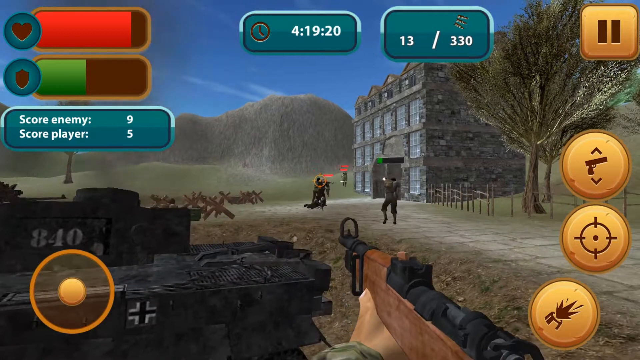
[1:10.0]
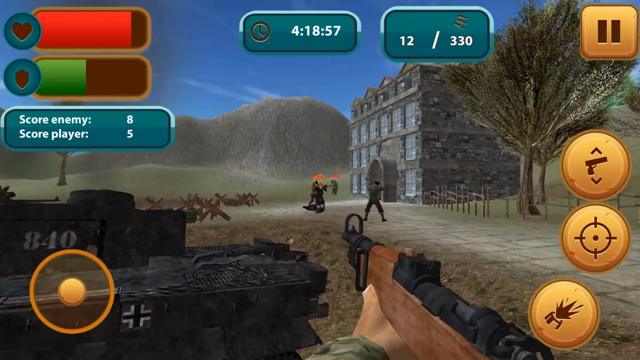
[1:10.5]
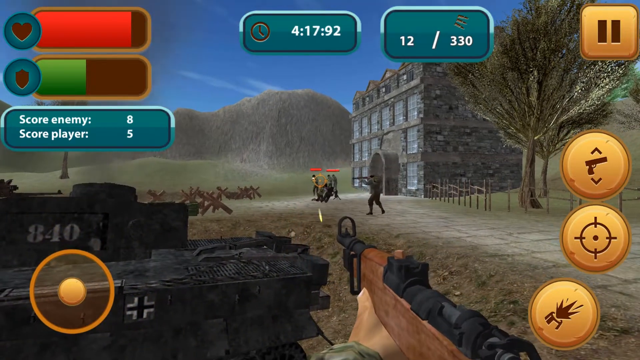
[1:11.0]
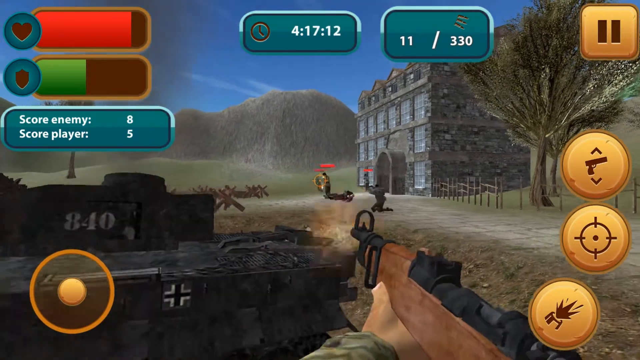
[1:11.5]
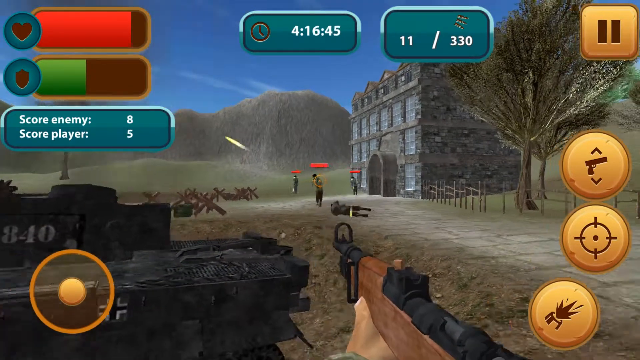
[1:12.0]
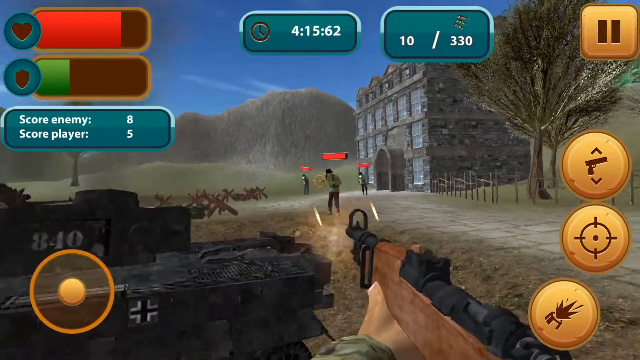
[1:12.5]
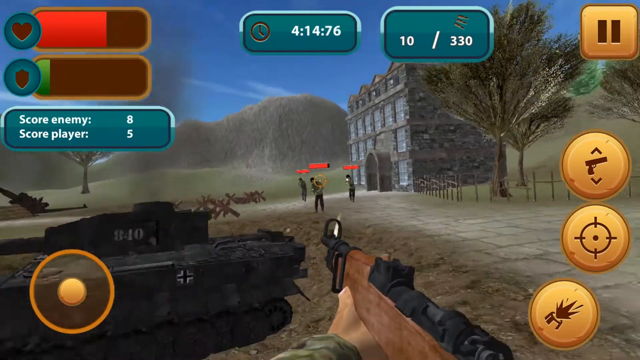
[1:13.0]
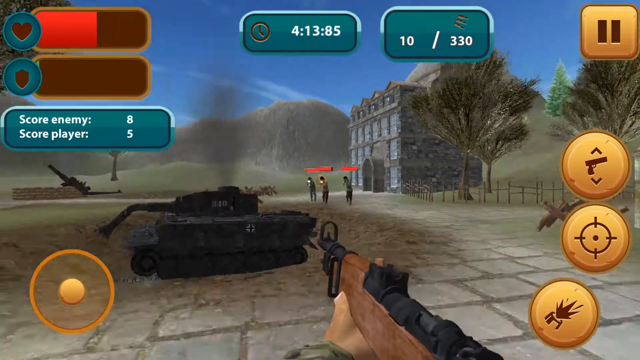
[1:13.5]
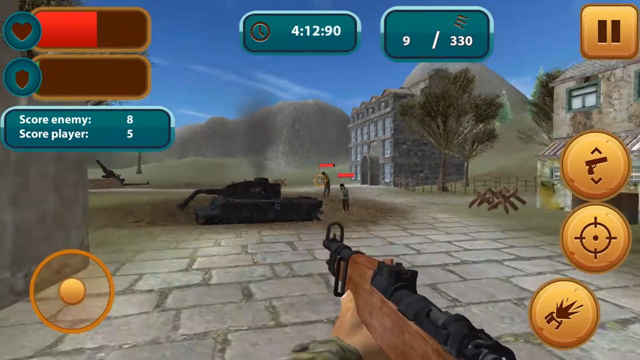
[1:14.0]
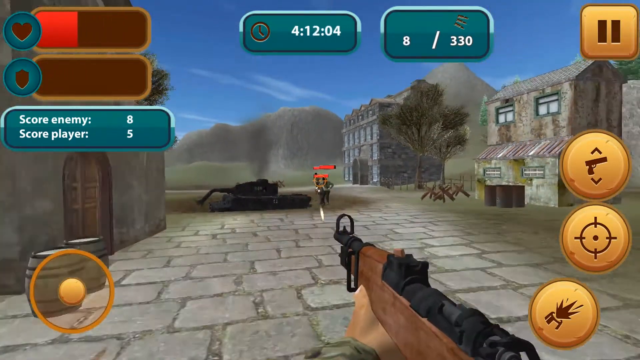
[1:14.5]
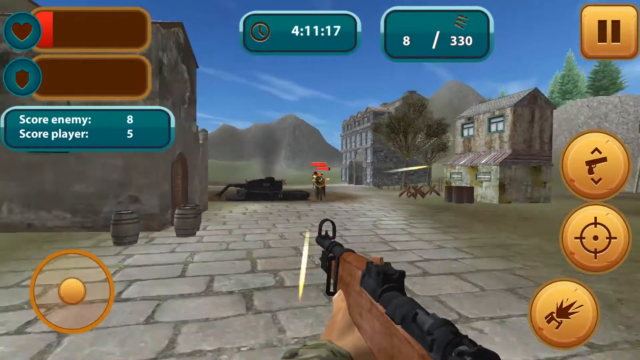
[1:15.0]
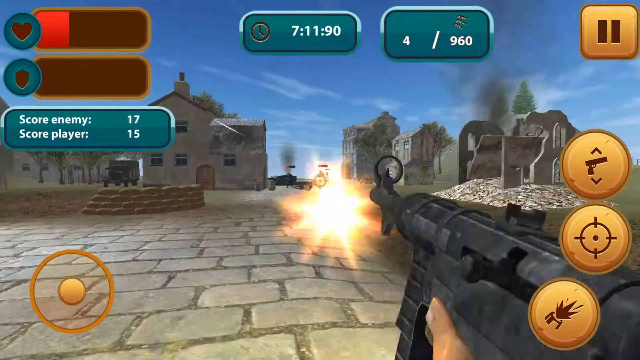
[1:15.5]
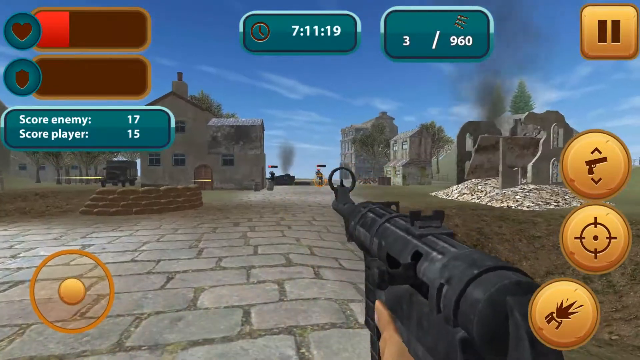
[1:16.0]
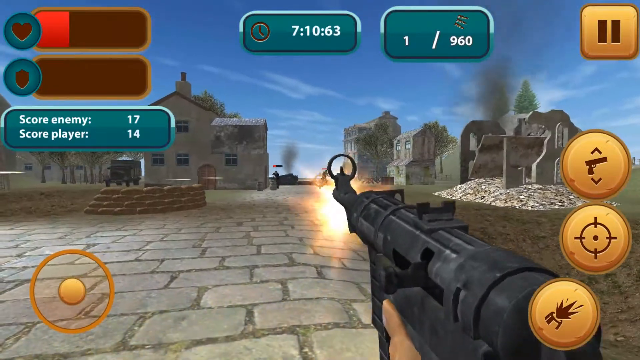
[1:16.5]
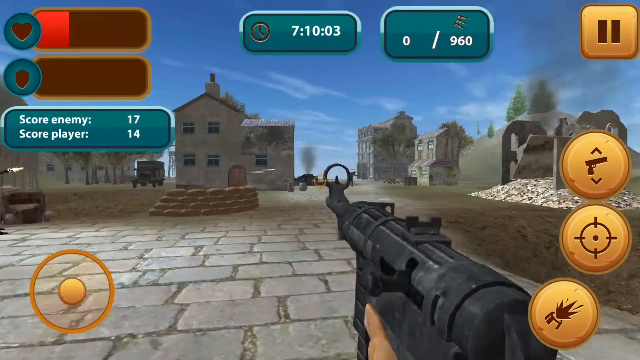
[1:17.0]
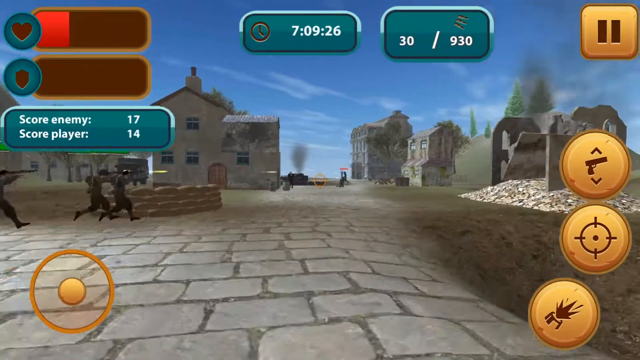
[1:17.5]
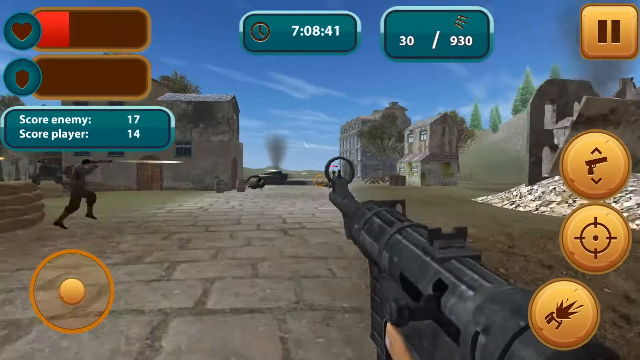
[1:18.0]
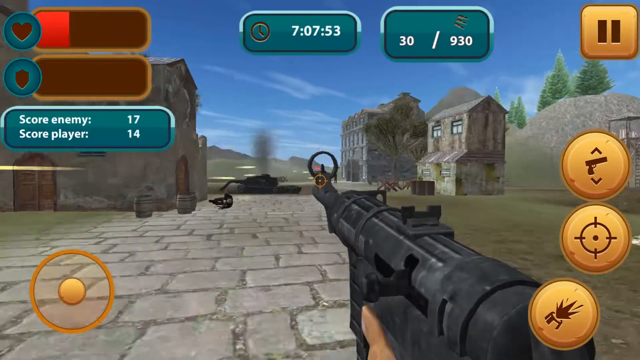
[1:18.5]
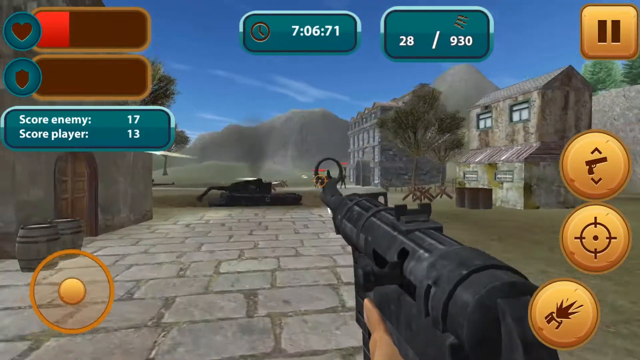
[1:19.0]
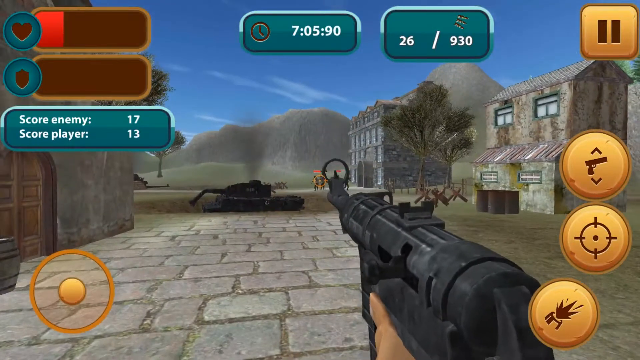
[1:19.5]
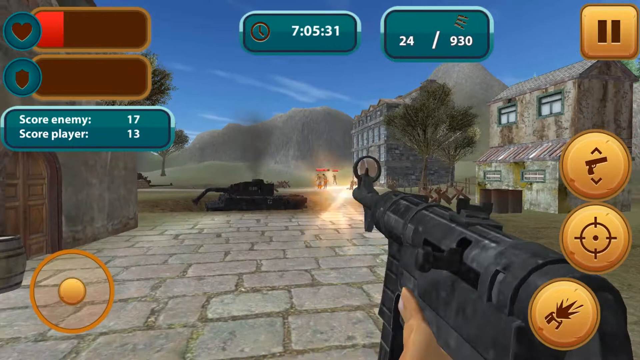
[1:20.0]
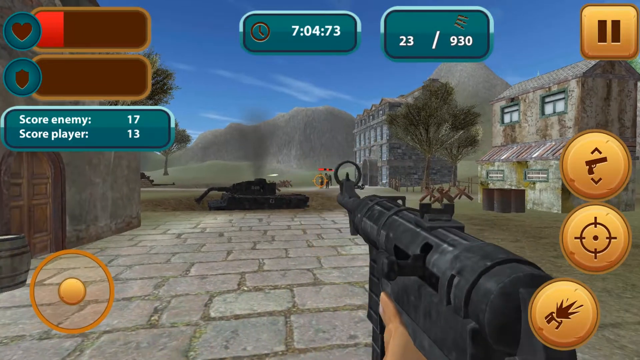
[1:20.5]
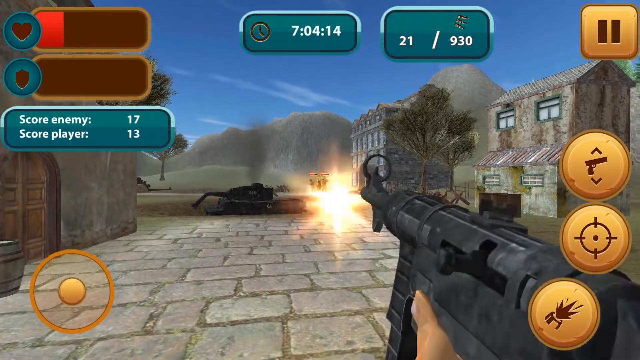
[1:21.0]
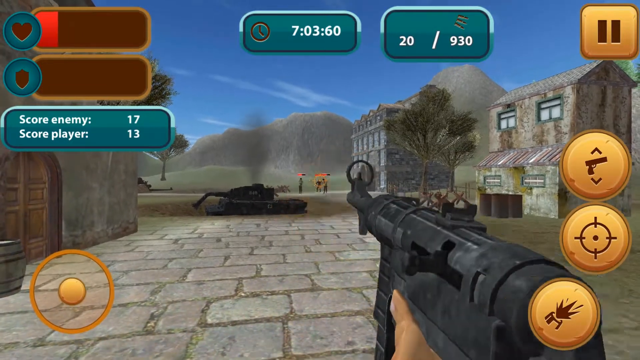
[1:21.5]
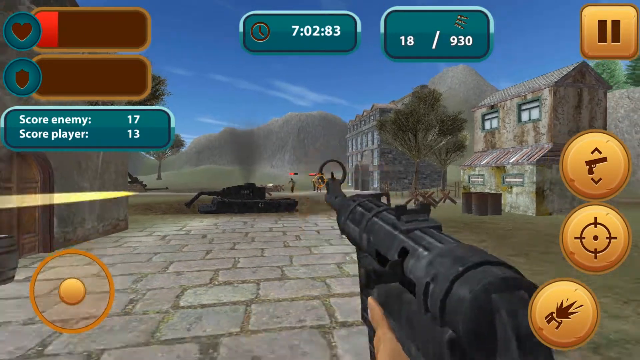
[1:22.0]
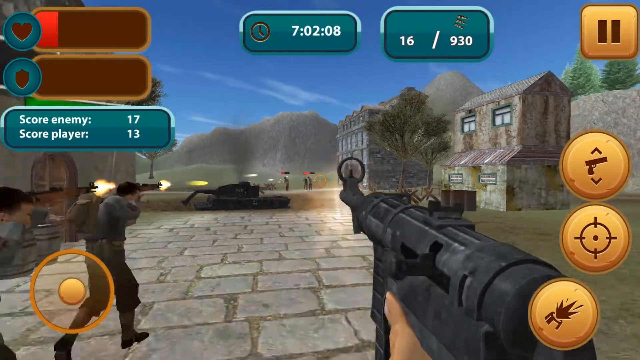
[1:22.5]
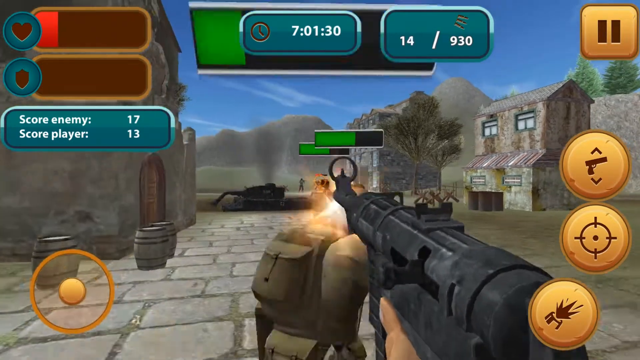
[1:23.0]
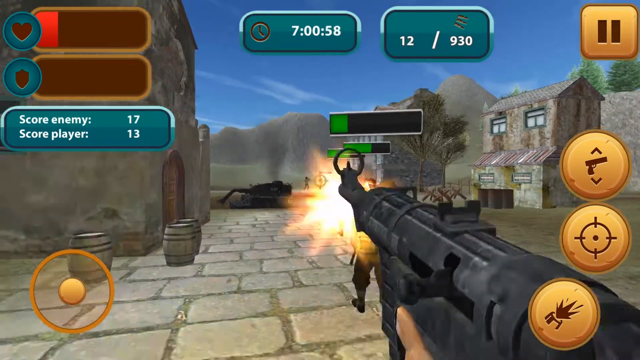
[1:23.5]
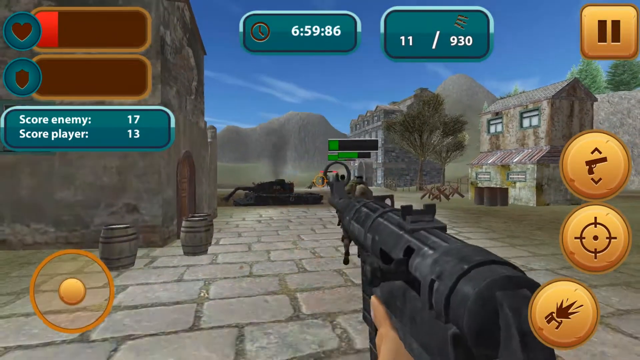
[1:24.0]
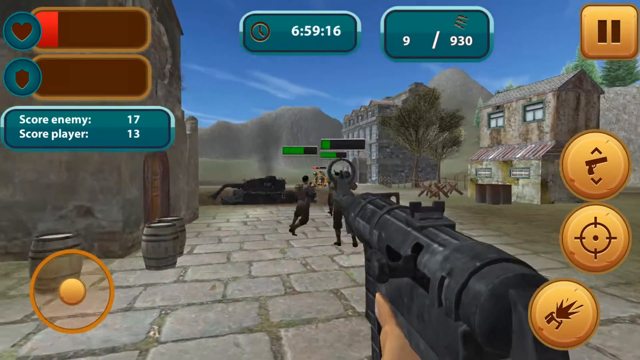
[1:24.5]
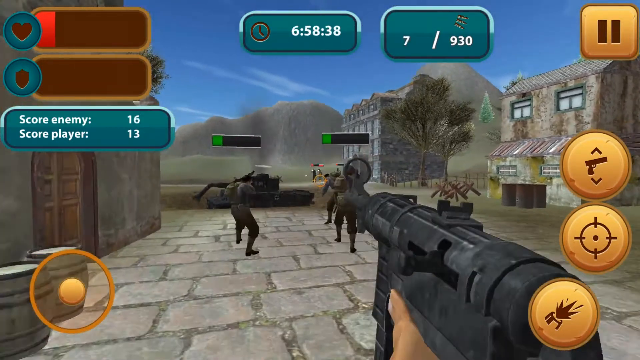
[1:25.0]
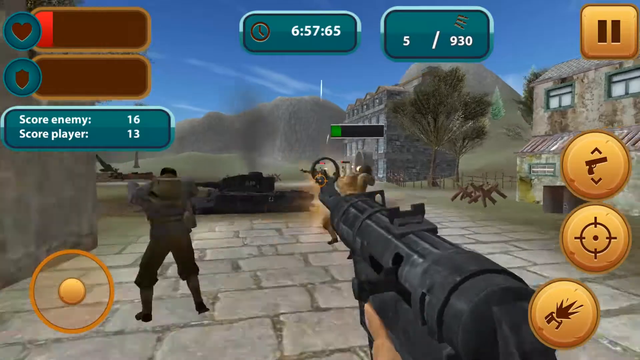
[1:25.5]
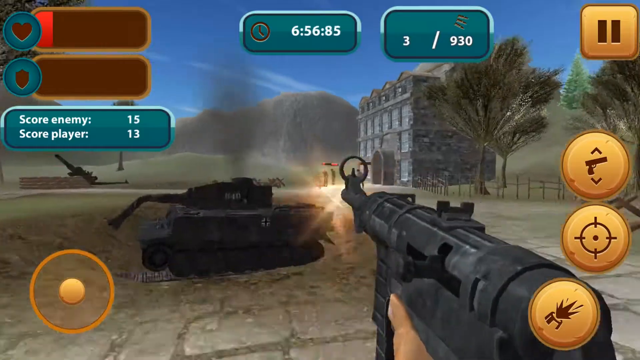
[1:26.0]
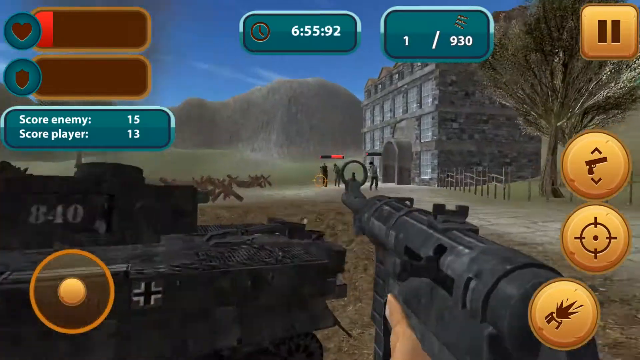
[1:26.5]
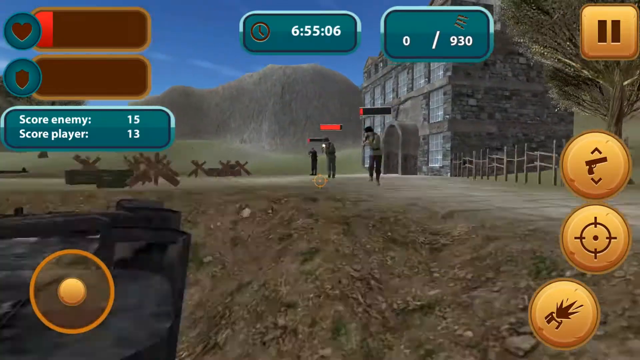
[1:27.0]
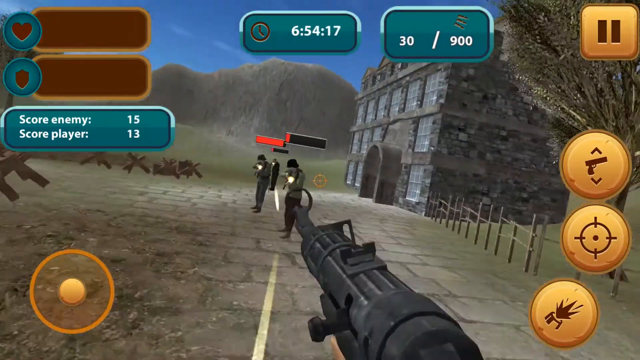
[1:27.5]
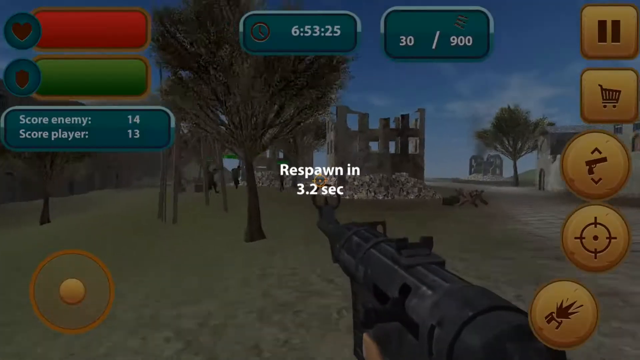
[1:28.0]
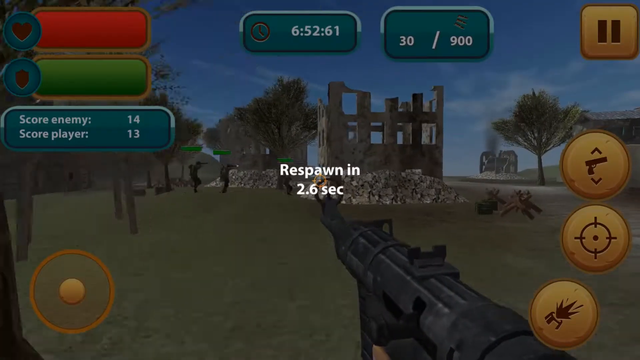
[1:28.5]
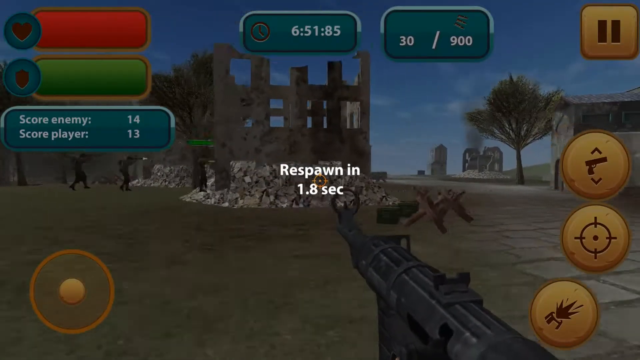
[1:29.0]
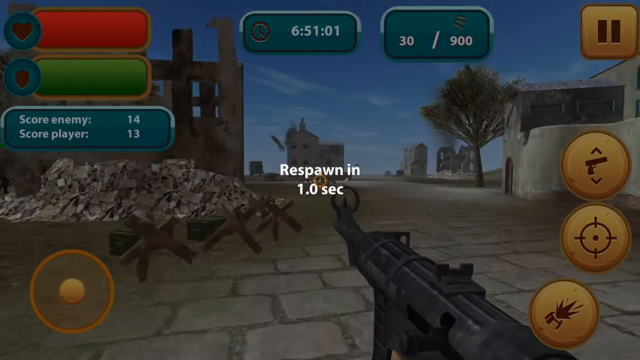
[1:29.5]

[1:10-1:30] After the charge, AI enemies keep shooting the protagonist, who appears very close to death, with very low HP. He shoots what looks like a Grease Gun into the enemies. He then respawns. The HUD shows a switch-weapons button, with a crosshair symbol right below it that is apparently an aim-in function, and a fire button below that. At the top of the screen, a magazine capacity is to the right of the time left, and to the left of the time left there appears to be a health and shield bar. A pause button appears to be in the top right corner, above the switch-weapons tab. There is also a sort of player-based scoreboard.